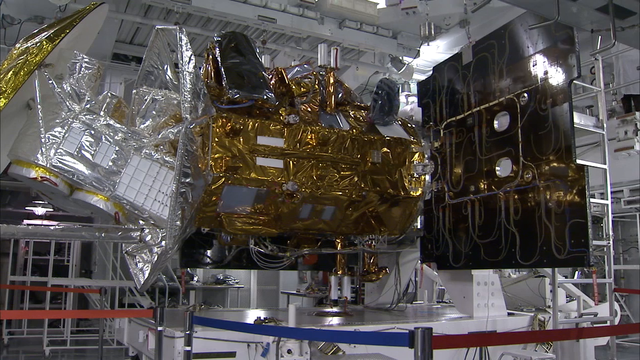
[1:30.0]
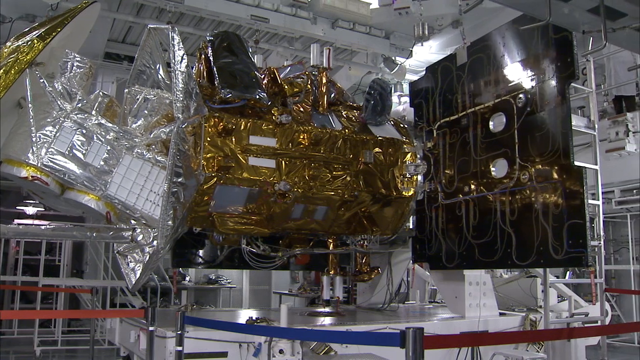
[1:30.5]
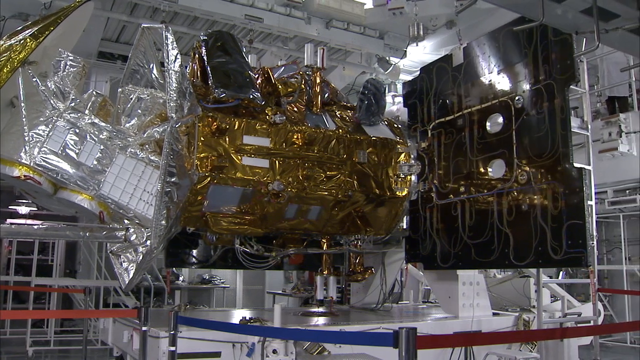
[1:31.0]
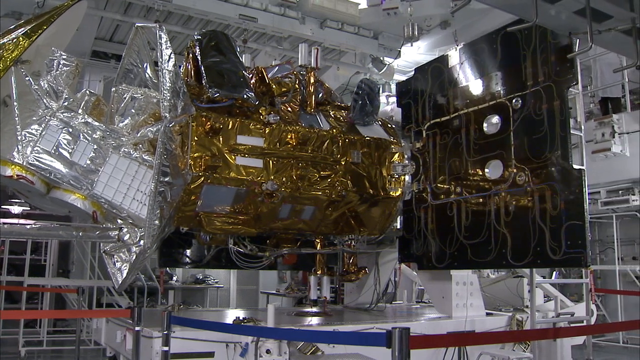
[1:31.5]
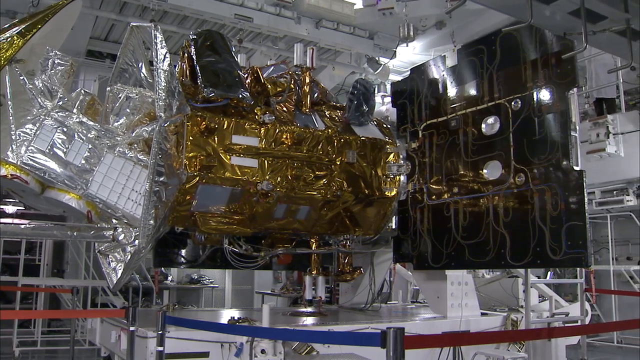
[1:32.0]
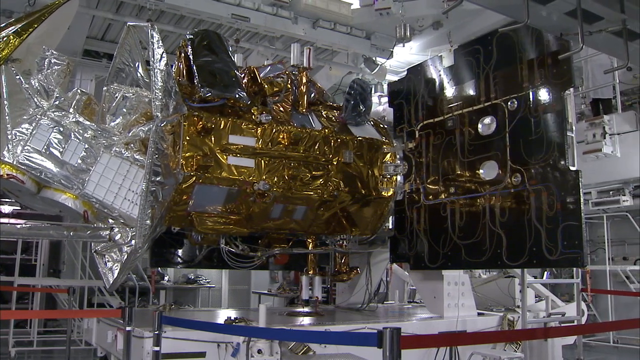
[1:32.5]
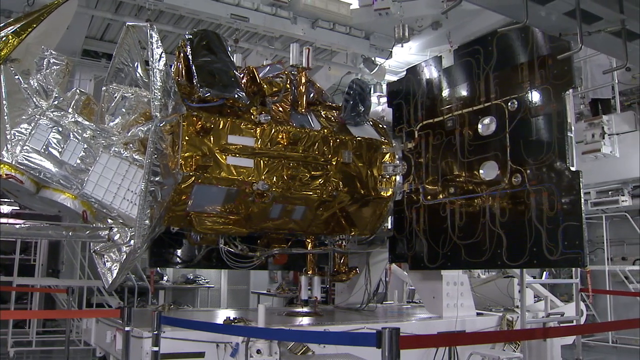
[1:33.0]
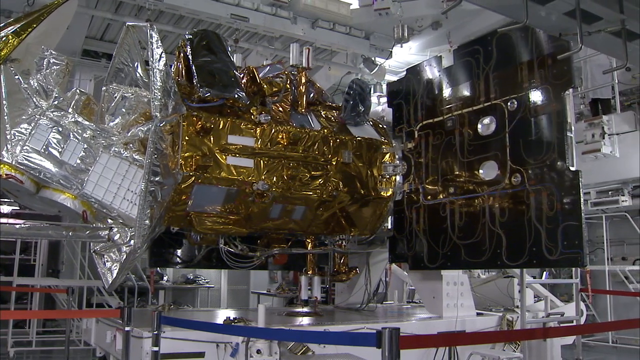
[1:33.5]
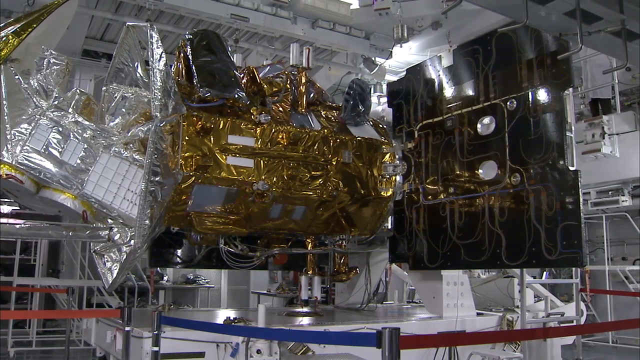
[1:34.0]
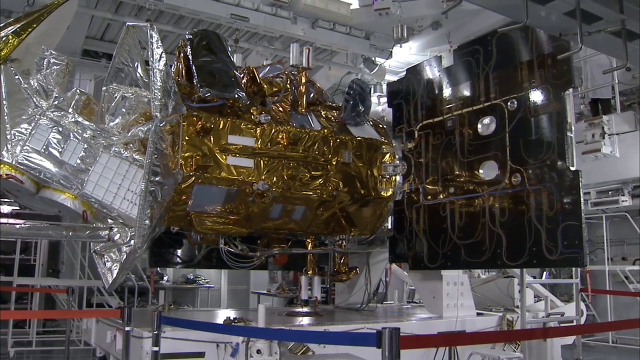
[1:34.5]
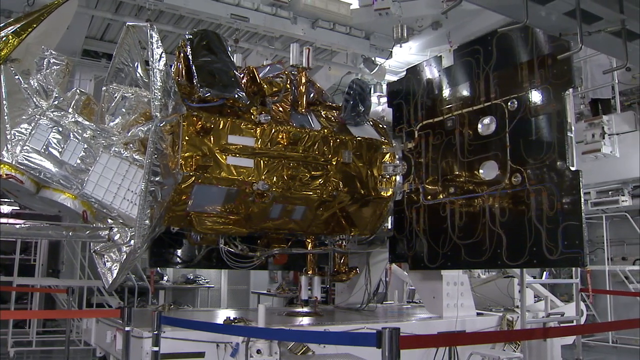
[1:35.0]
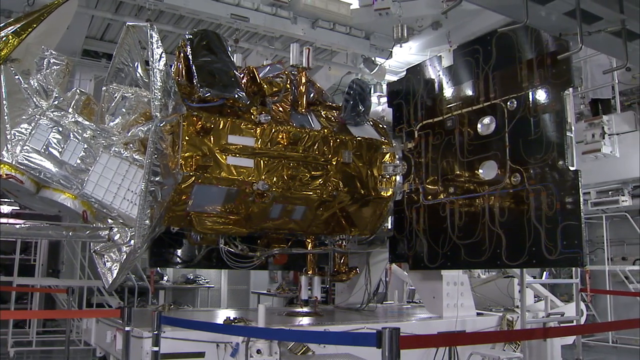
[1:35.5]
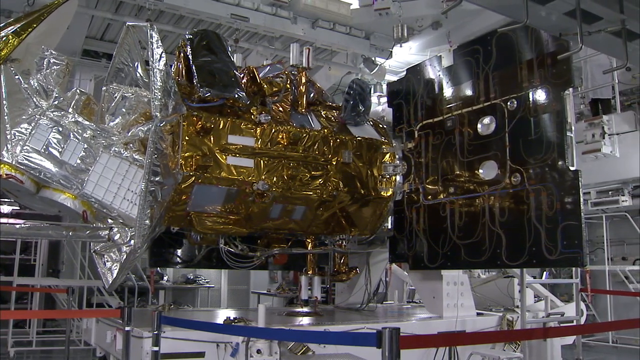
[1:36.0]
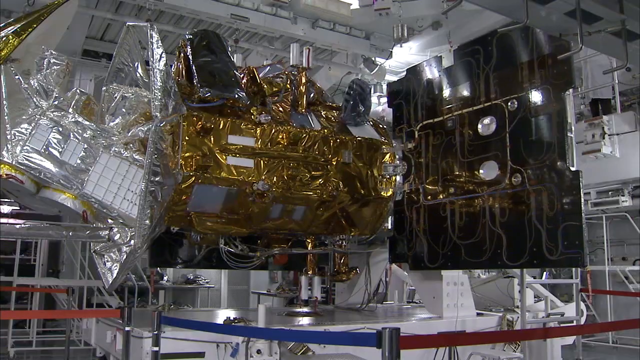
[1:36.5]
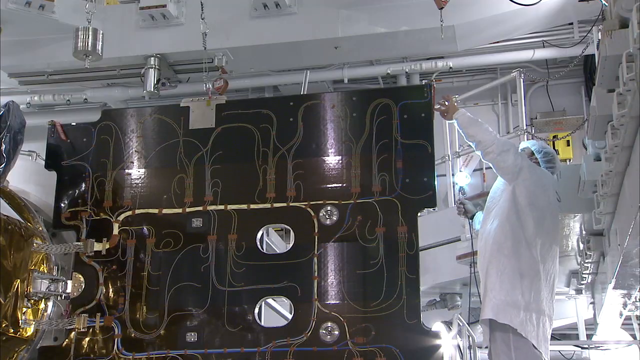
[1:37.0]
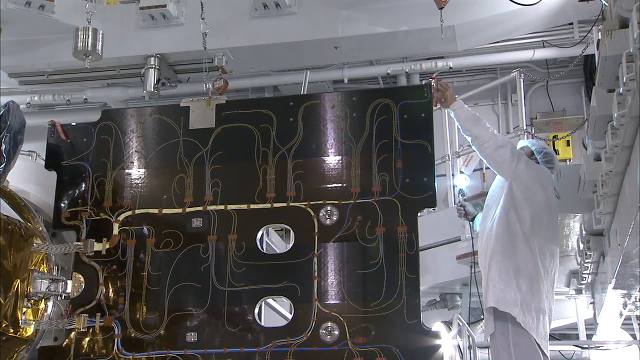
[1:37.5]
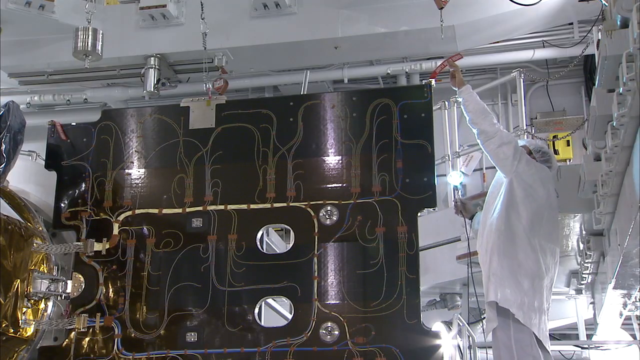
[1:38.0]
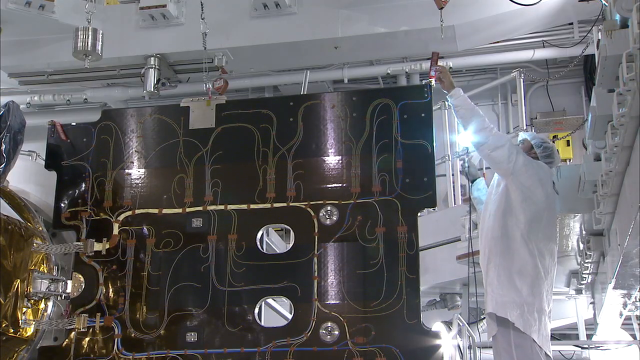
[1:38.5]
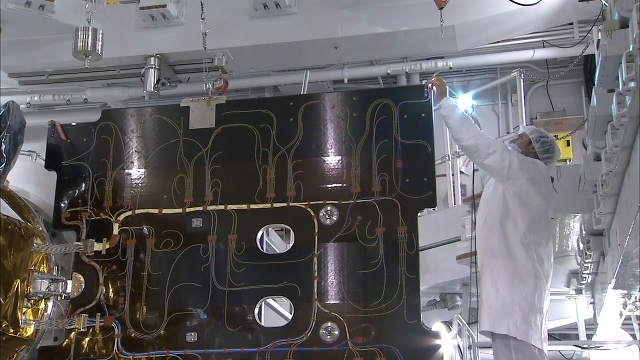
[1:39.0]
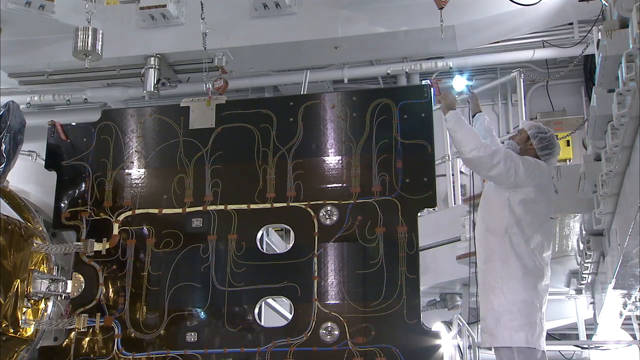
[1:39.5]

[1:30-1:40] The warehouse is mostly white looking, with bright lights around. A large black square piece is on the right side. Inside, there is some gold-looking material and a lot of what appears to be plastic covering different areas. Someone in a white lab coat shines a light over top of some sort of equipment, apparently to get a better look; the person seems to be looking at some sort of panel, which is black and has some wires on it.